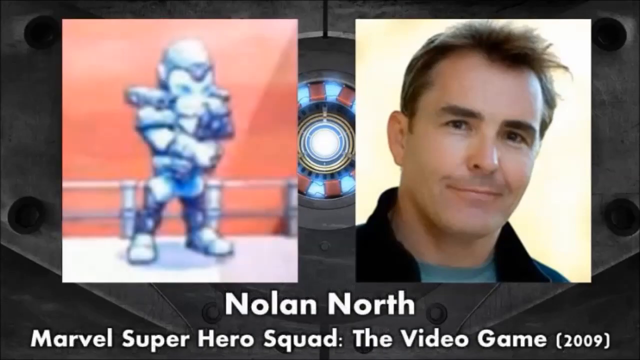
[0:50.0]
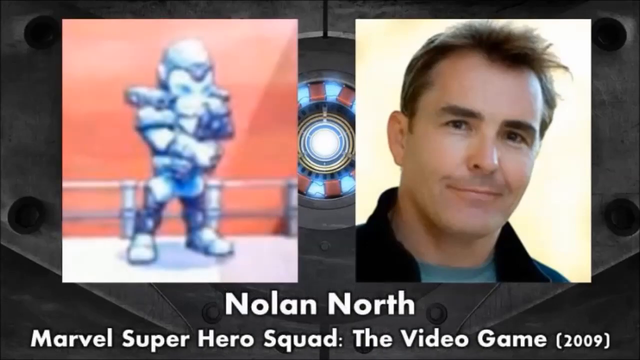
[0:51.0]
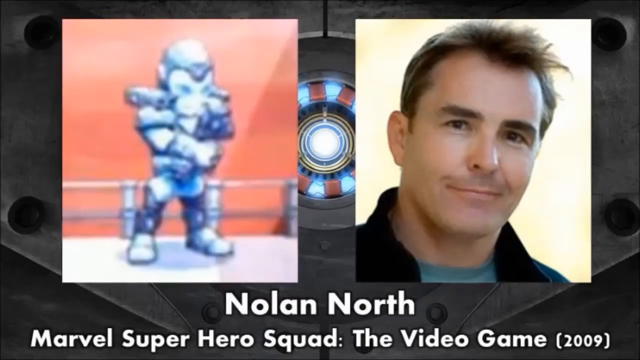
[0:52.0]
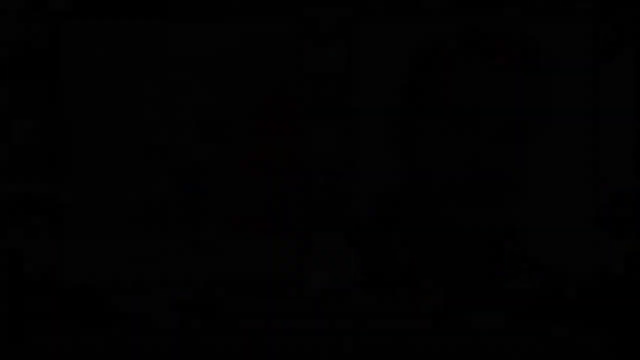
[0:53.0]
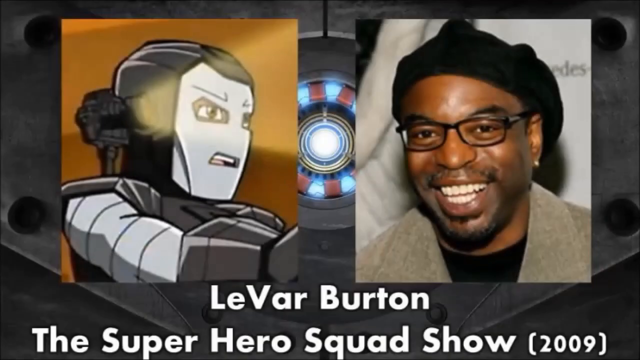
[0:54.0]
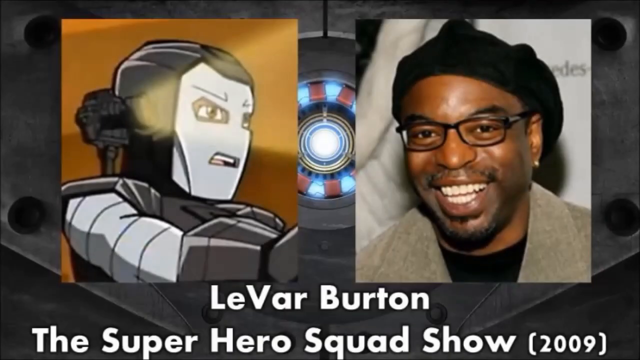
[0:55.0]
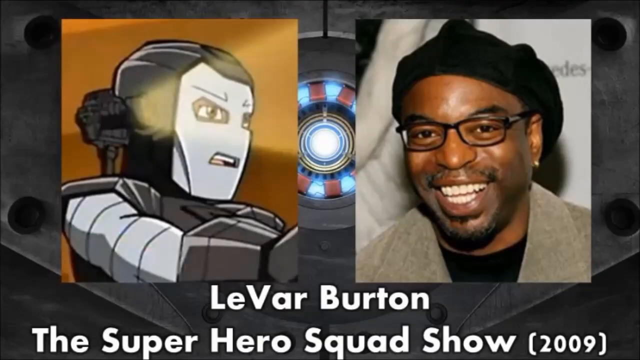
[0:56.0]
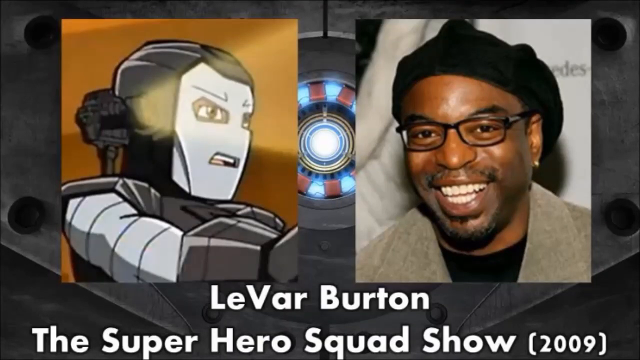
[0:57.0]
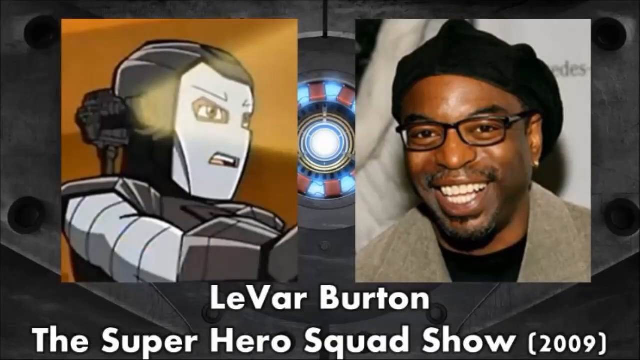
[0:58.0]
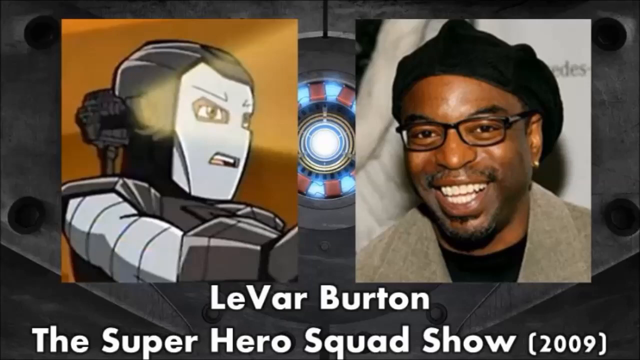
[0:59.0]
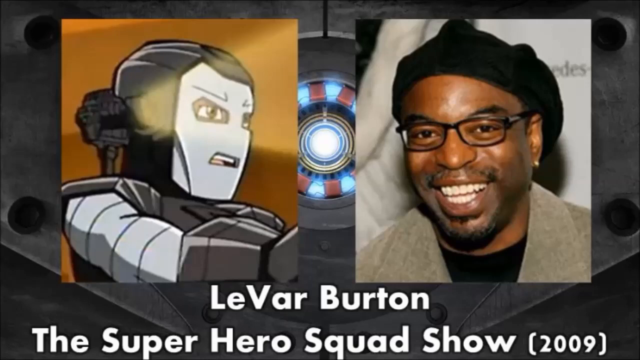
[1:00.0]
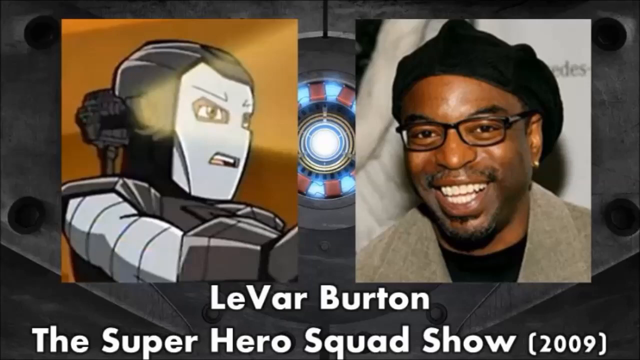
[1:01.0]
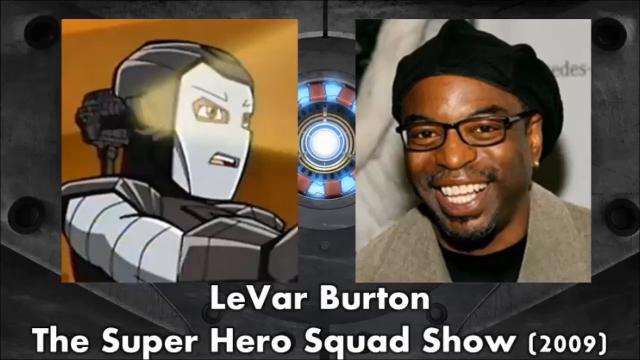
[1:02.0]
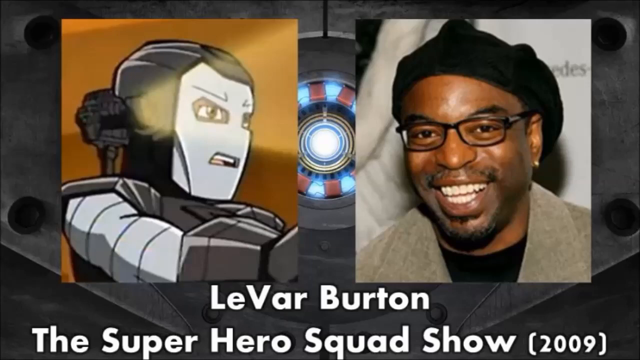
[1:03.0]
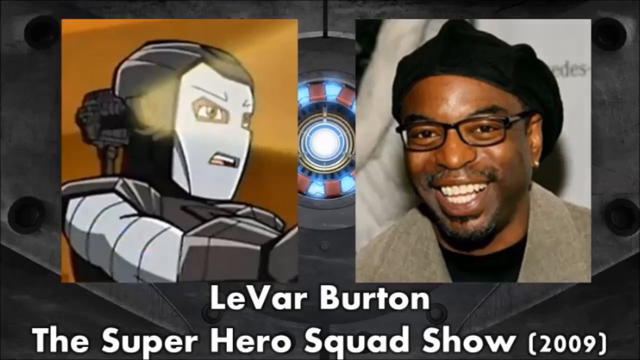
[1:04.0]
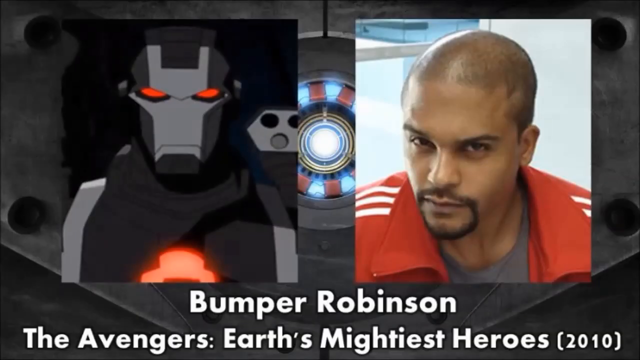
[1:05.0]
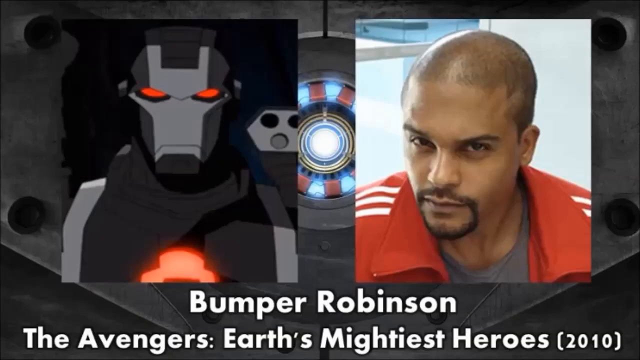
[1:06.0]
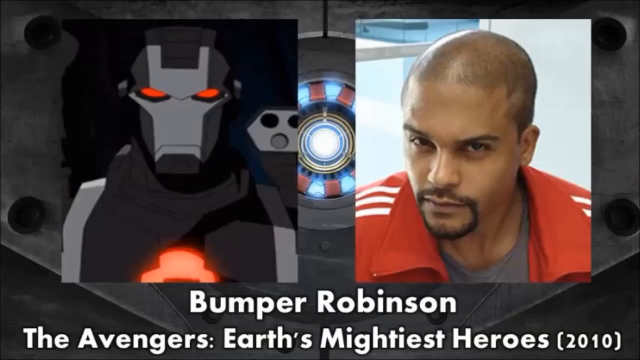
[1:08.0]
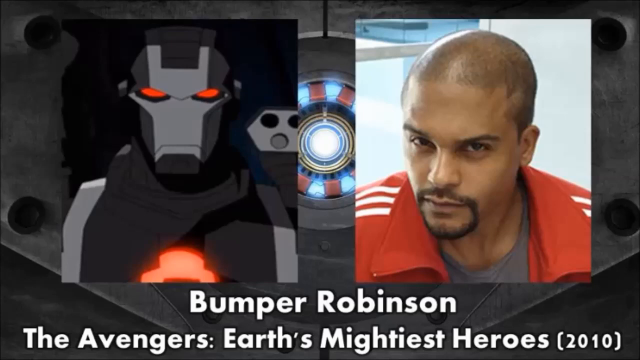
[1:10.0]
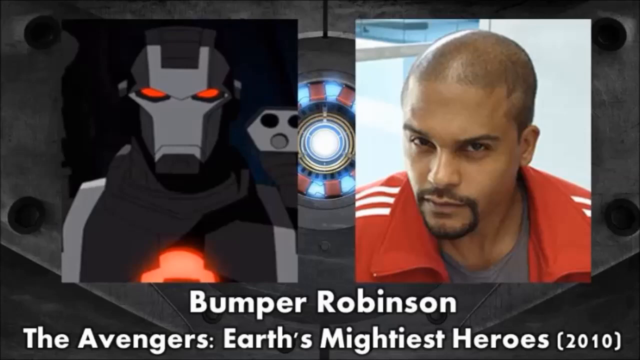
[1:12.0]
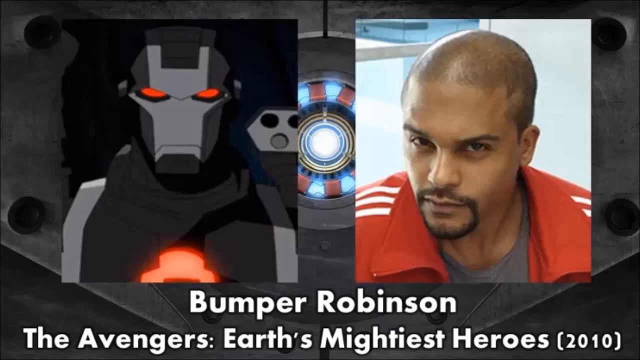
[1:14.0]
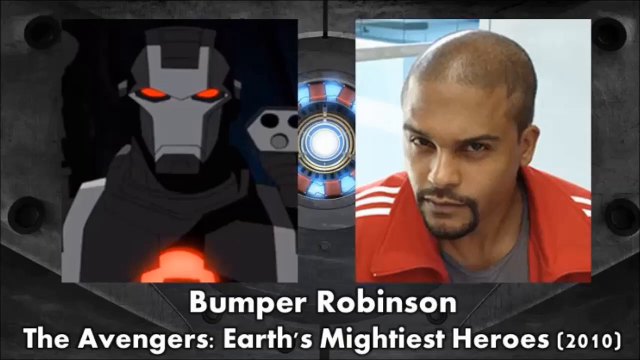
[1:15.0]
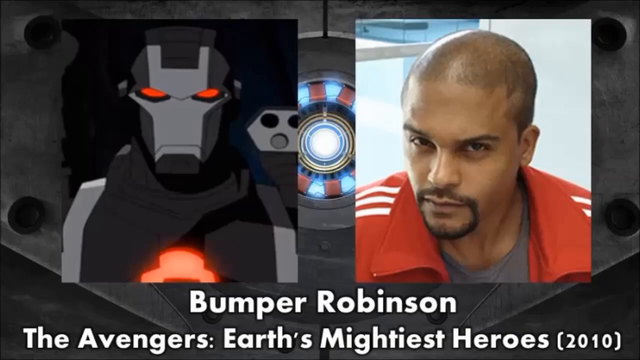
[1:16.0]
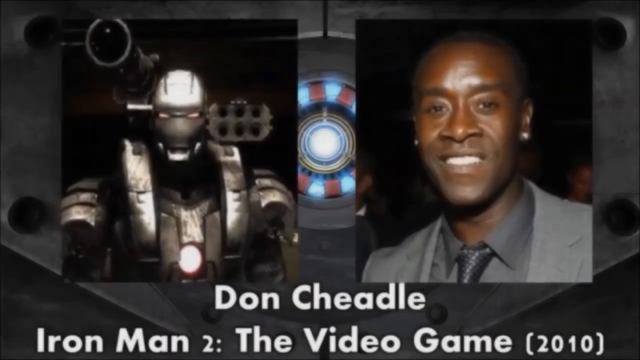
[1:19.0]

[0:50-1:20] The character of Nolan Knott, from Marvel Super Hero Squad in 2009, is on the left-hand side of the screen and is a bit blurred. The video turns to LaVar Burton, who was part of the Super Hero Squad Show in 2009: a black man shown in a picture on the right side wearing a black hat, glasses and earrings and smiling, while on the left-hand side his character uses what looks like lights coming from its shoulders. Next is Bumper Robinson, part of the Avengers characters in 2010, a light-skinned black male with short hair wearing a red jacket in his picture; on the left-hand side is an animated character in a dark black suit with gray eyes, a blue circle in the middle of his chest, and guns coming from his shoulders. The video then moves into a scene of another character.